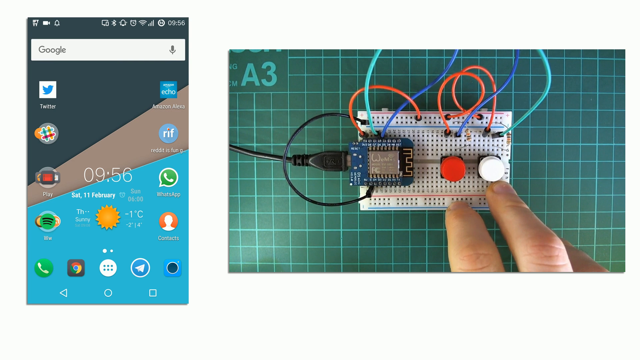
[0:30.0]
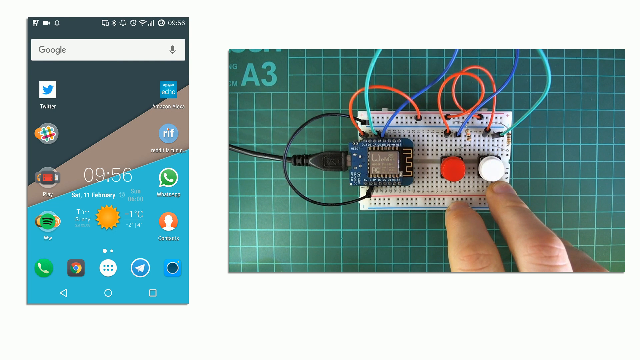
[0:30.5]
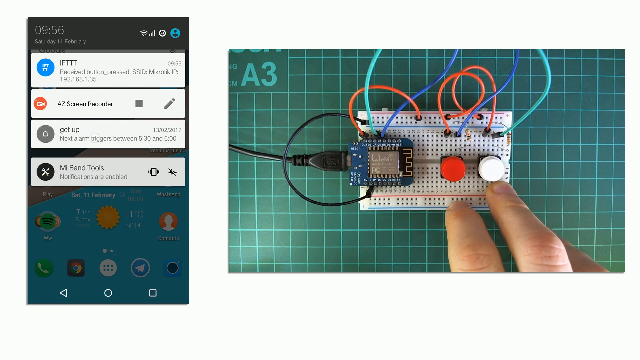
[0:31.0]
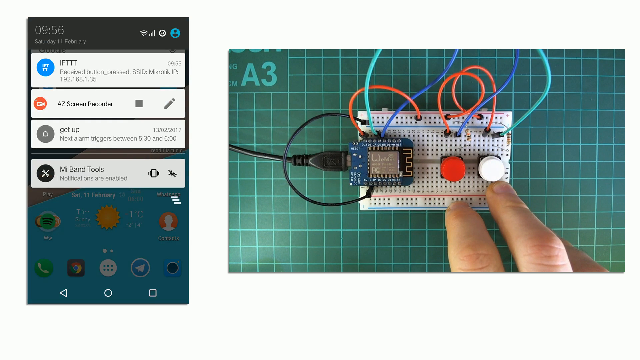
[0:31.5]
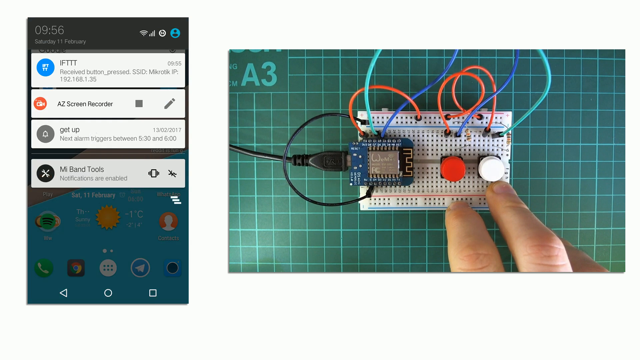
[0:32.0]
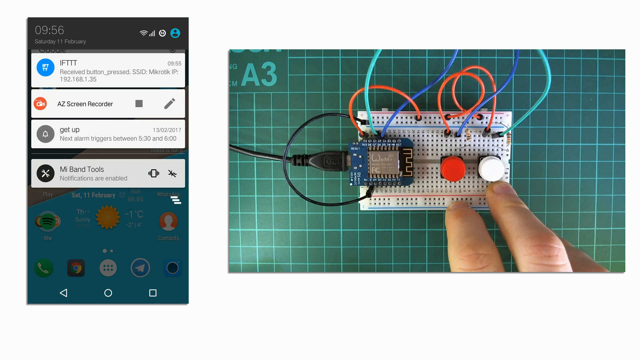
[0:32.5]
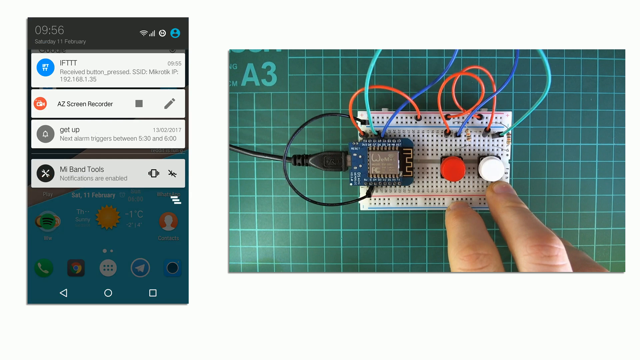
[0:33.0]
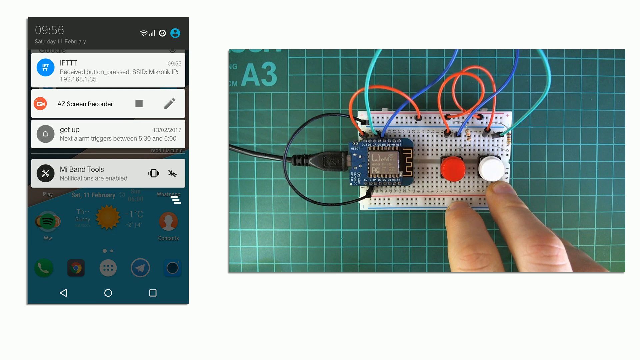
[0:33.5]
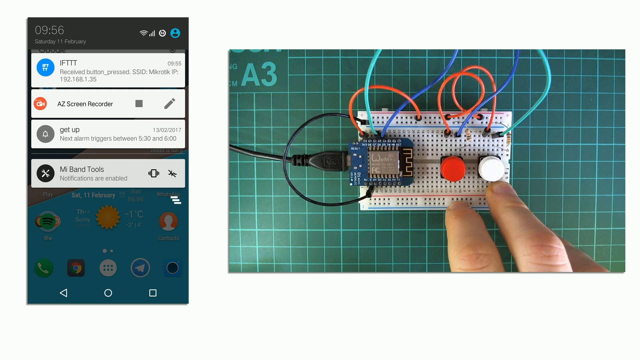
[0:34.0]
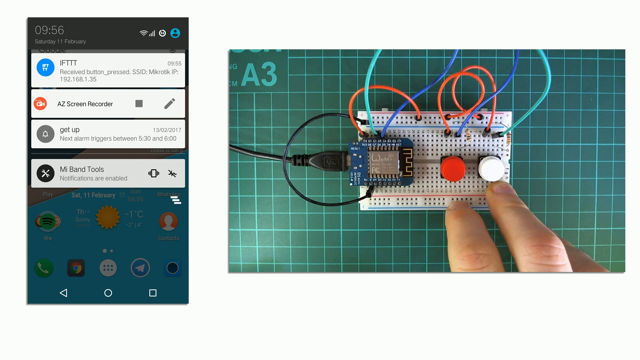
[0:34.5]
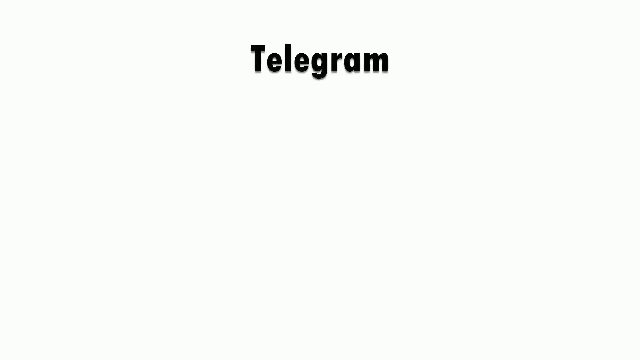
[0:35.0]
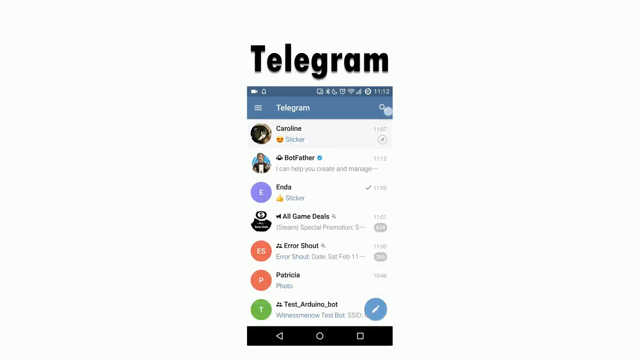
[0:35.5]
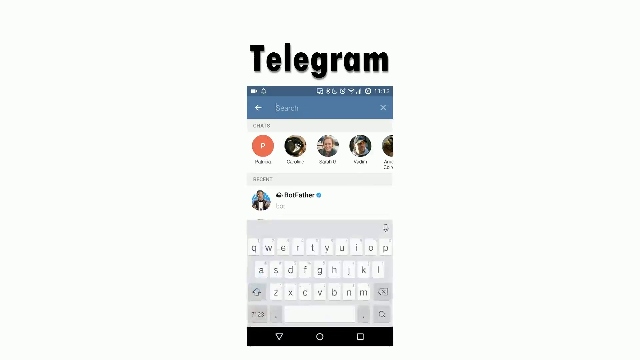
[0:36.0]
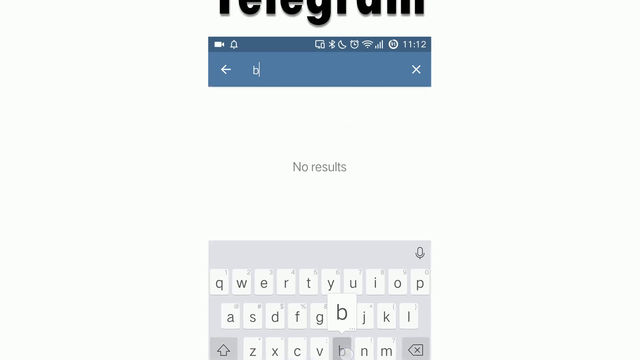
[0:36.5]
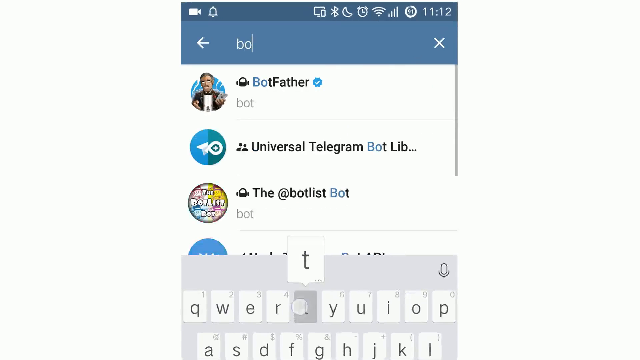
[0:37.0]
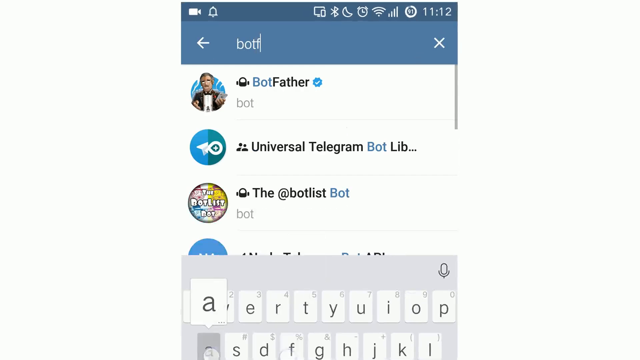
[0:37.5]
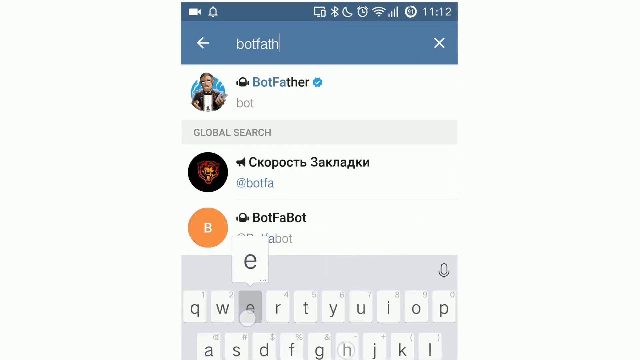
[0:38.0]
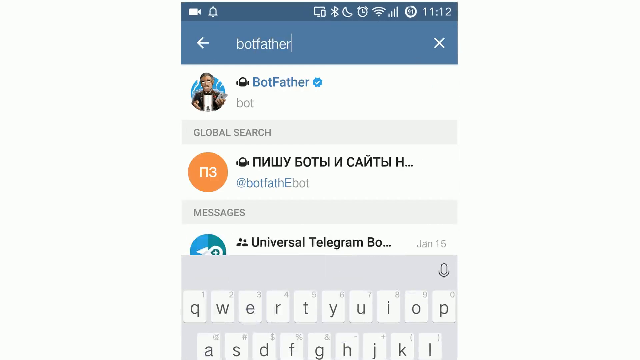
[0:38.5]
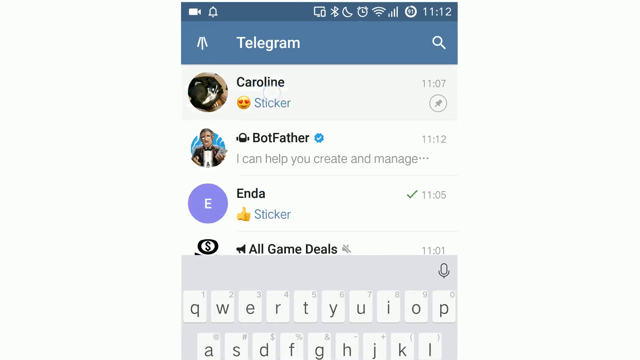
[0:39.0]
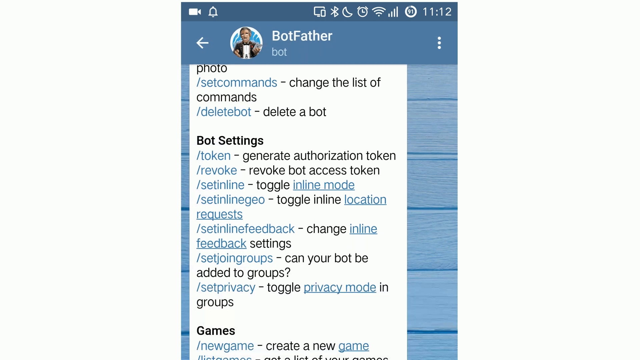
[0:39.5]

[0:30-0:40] Two different screens are shown. One looks like the front of a phone with all its icons; the other shows what is apparently a big microchip with a USB connection that powers it on. It has two buttons, a white one and a red one. The focus is on the phone, where the options include IFTT and AZ screen recorder. A screen then says "telegram." The phone's search is opened and "bot father" is typed in, which pulls up bot father. Beyond that, it shows little other than some text, possibly from bot father, that looks like the syntax used to create a page.